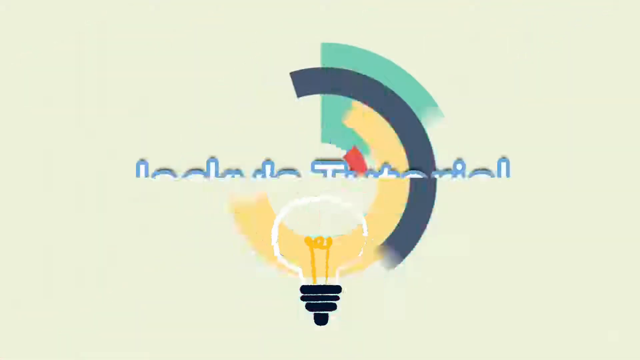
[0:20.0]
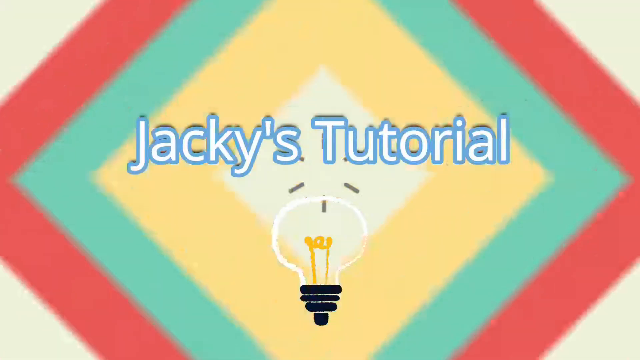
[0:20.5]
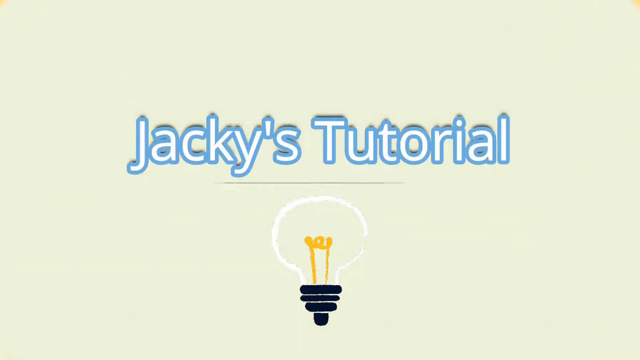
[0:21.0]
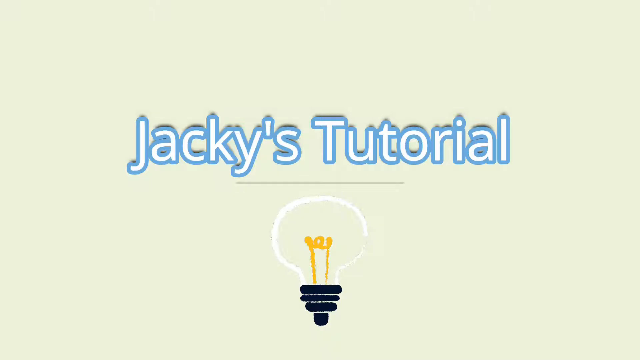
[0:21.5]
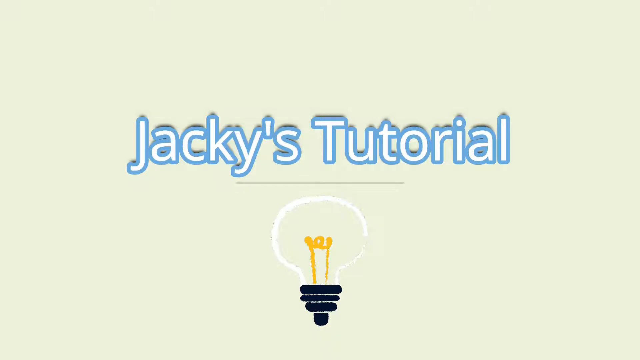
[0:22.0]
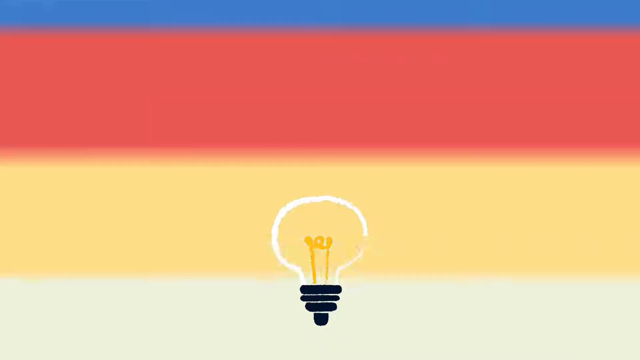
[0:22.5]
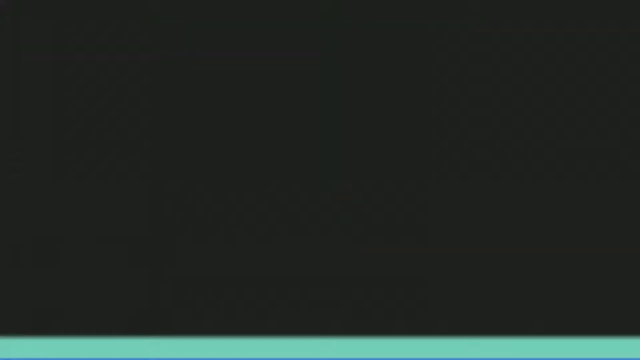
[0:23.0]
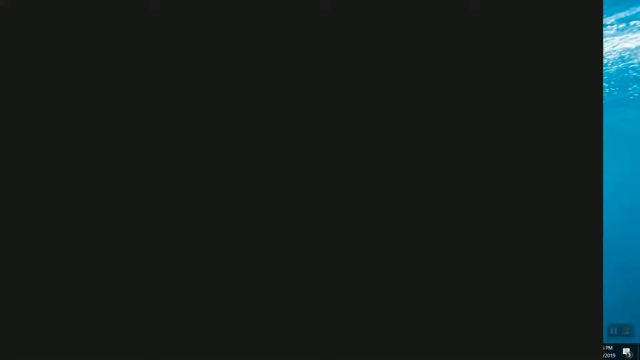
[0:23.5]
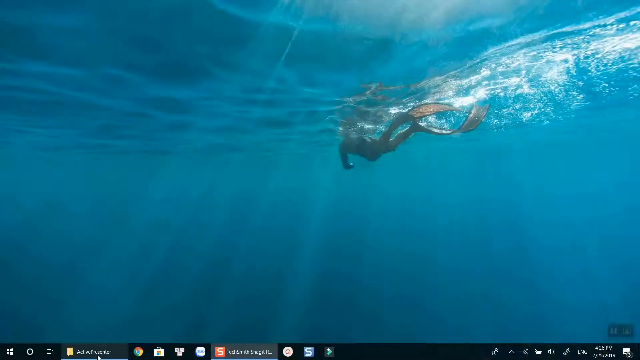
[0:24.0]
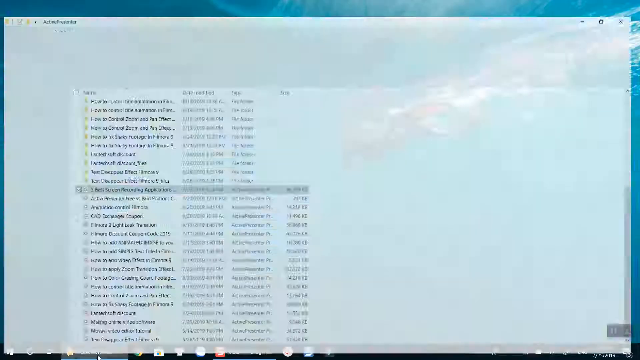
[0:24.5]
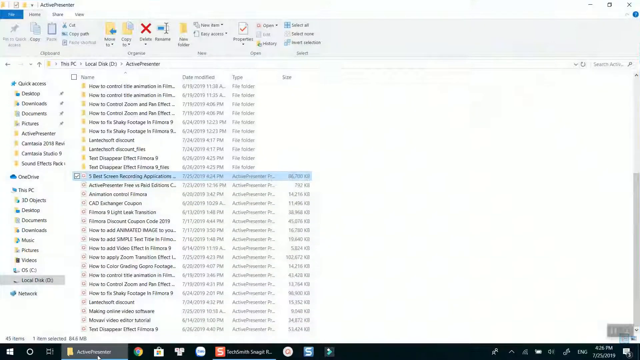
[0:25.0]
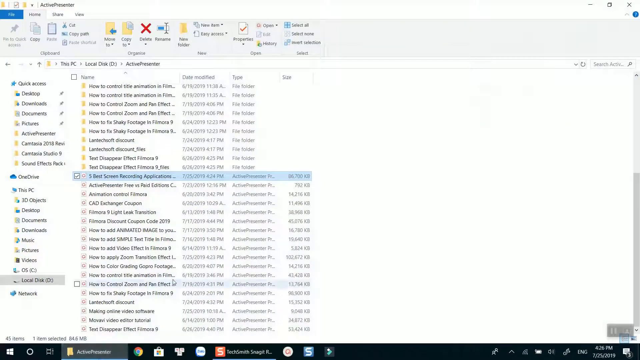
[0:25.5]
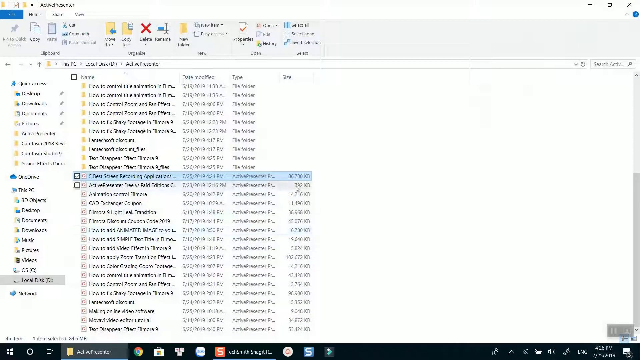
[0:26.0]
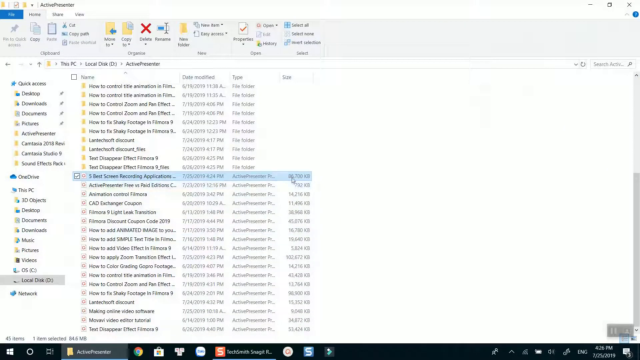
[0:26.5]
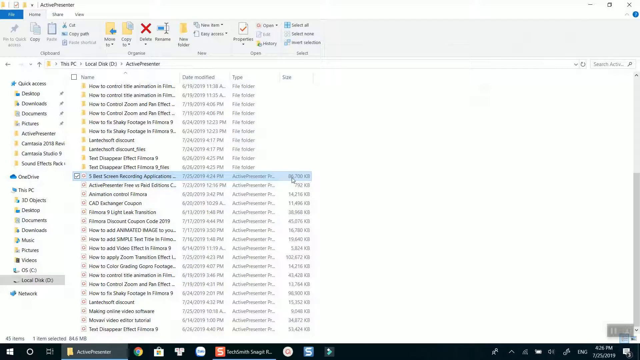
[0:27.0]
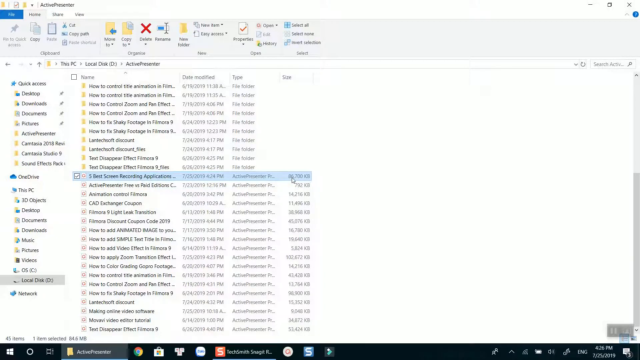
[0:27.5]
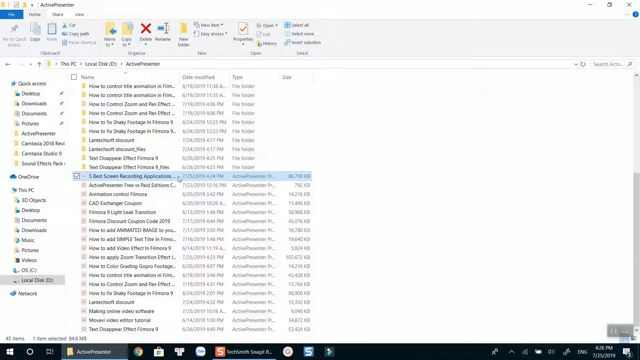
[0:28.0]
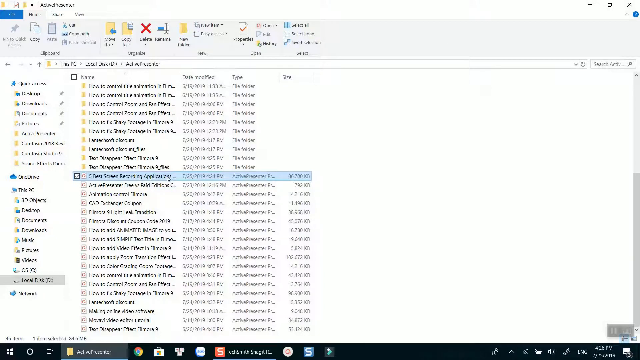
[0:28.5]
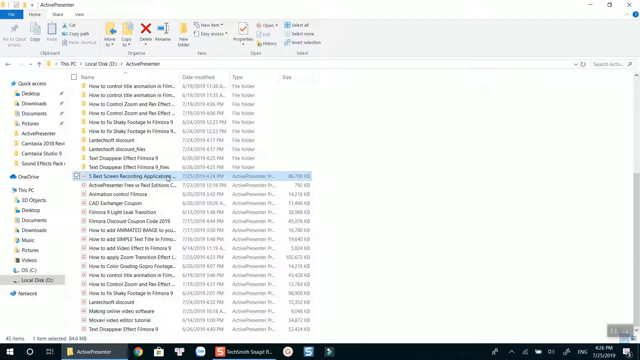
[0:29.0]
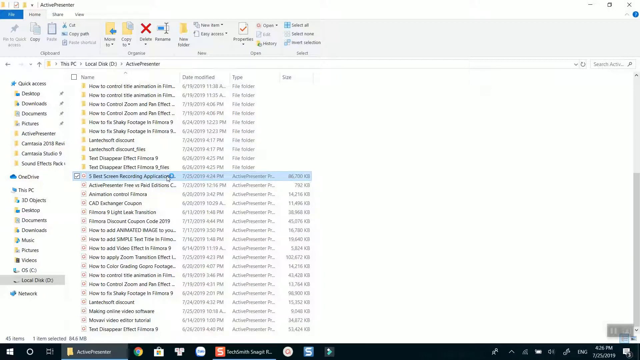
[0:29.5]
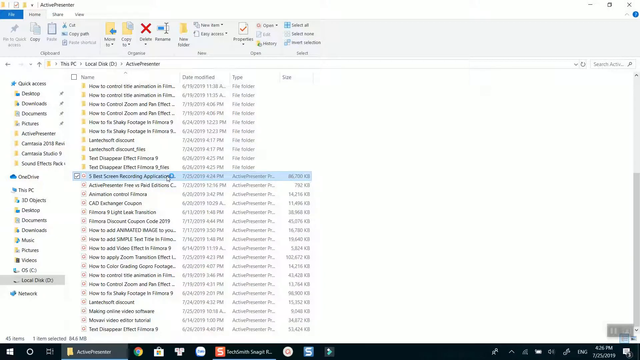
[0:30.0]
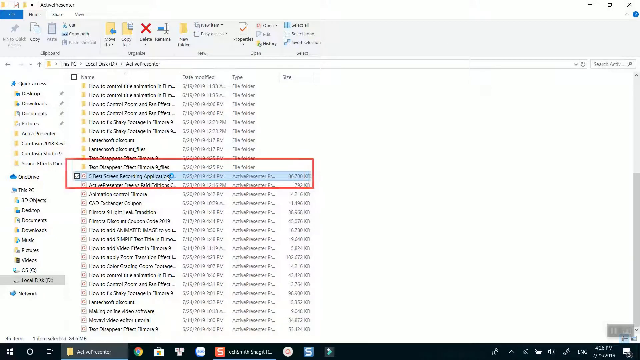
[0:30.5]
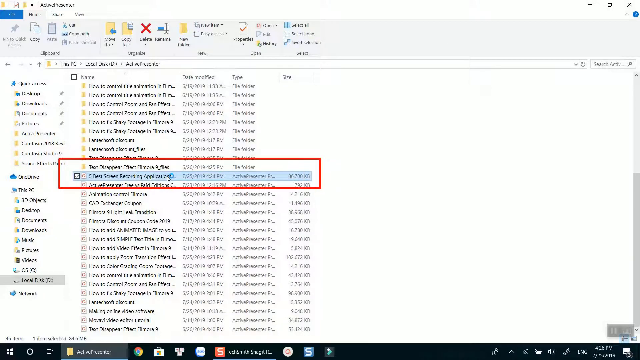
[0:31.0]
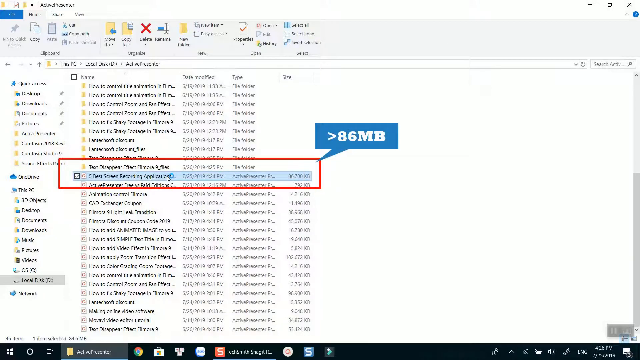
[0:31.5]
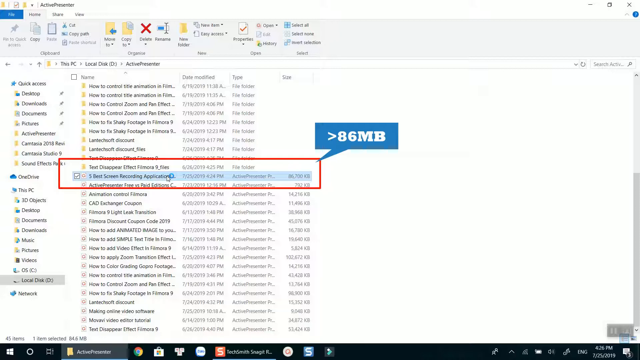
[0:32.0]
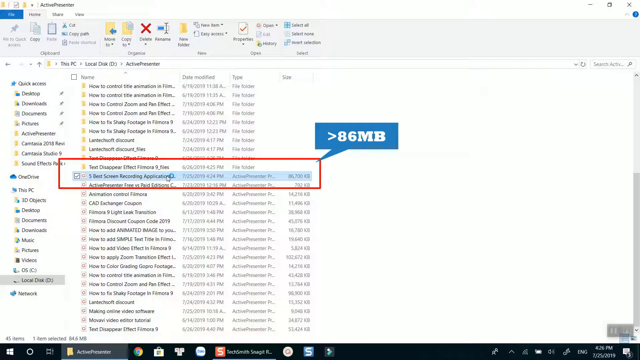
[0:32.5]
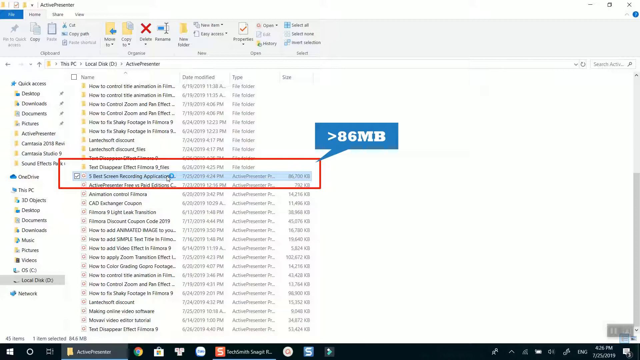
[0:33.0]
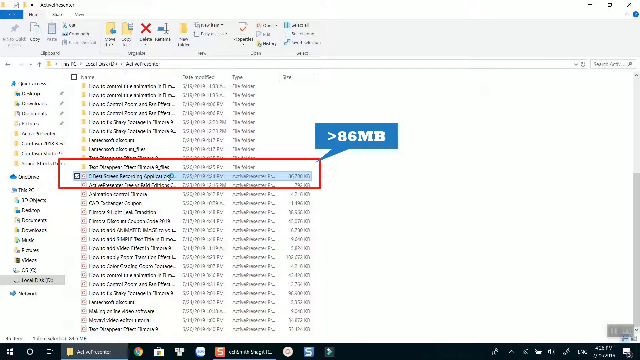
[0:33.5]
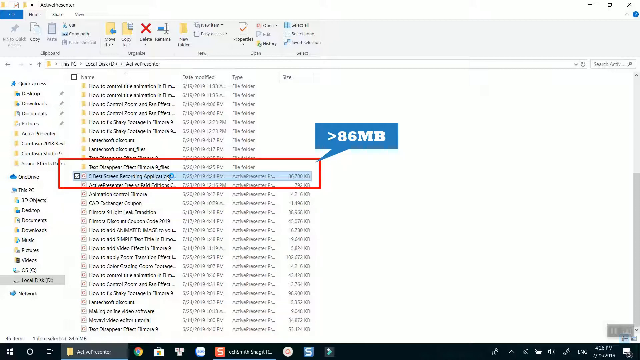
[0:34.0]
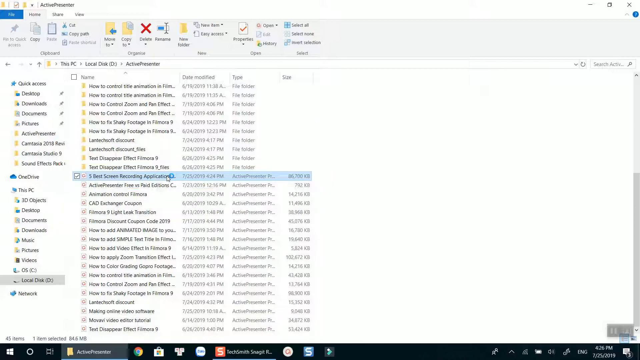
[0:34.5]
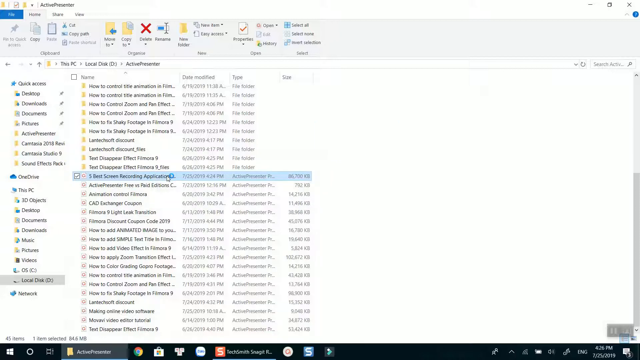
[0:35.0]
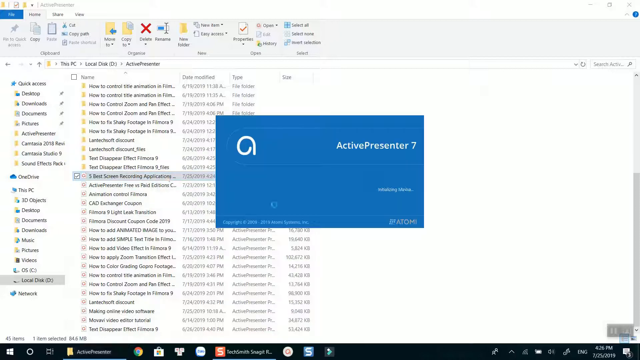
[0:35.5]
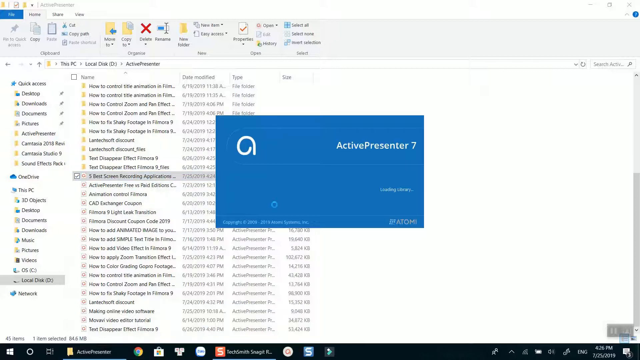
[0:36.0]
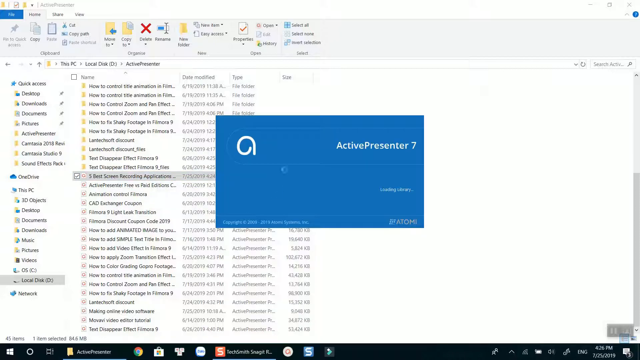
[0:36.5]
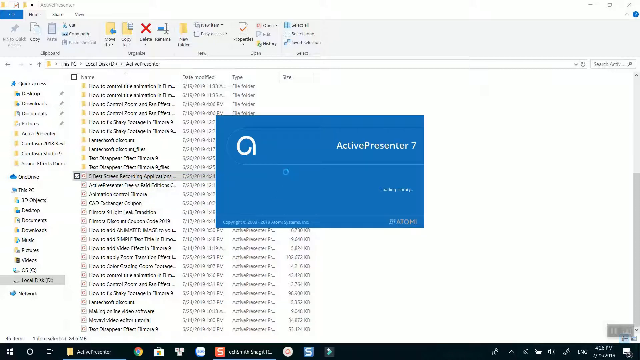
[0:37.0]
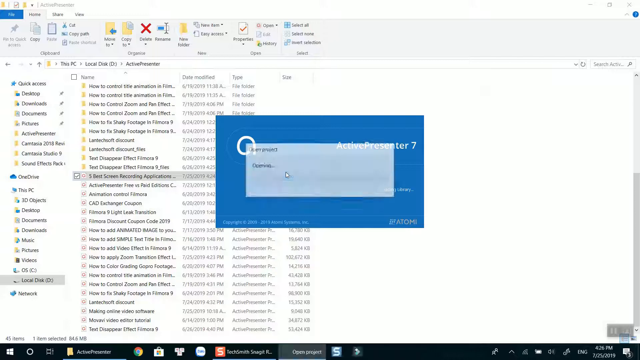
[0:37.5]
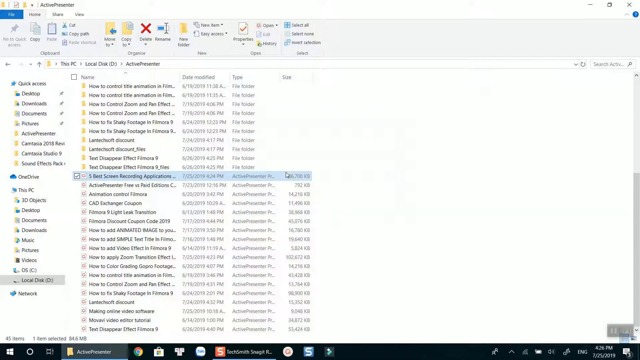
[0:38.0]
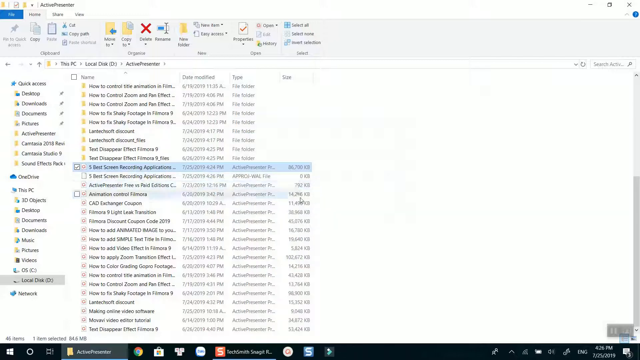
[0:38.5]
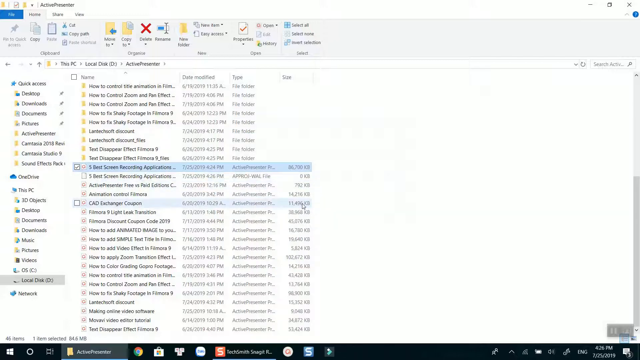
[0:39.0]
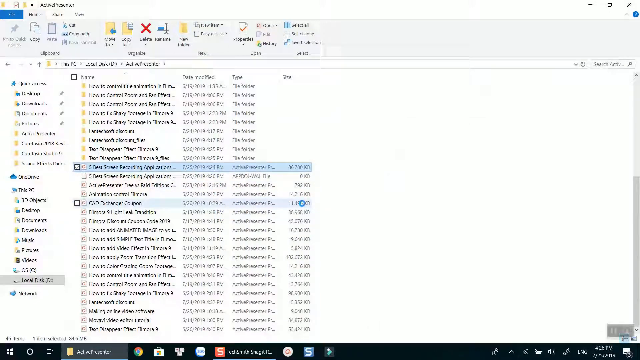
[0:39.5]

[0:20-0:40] The light bulb under "Jacky's tutorial" is an illustration with a white outline, a yellow electrical part in the center, and a black screw-in part at the bottom. The same strips of color swipe very quickly from top to bottom across the screen, followed by a black background swiping across. The picture of the diver shows momentarily, and then the view changes to a file system on a Windows PC, with "Active Presenter" at the very top. The person searches through files on the local disk; there are many files, including recordings. "five best screen recording applications" is currently selected, and many others are visible, such as "Active Presenter Free vs. Paid Editions," "Animation Control," "Filmora," "CAD," "Exchanger," and "Coupon." The person clicks on "five best screen recording applications," a red outlined rectangle appears around it, and it shows "86 megabyte," a size larger than 86 megabytes.